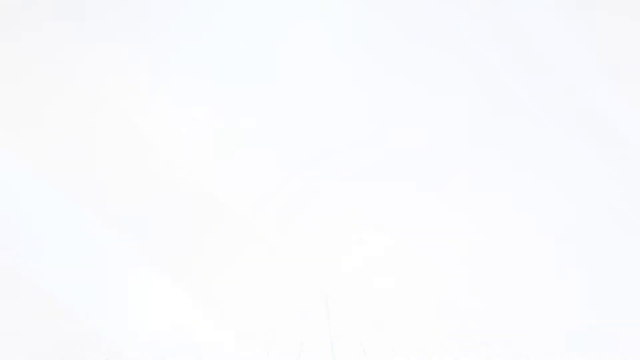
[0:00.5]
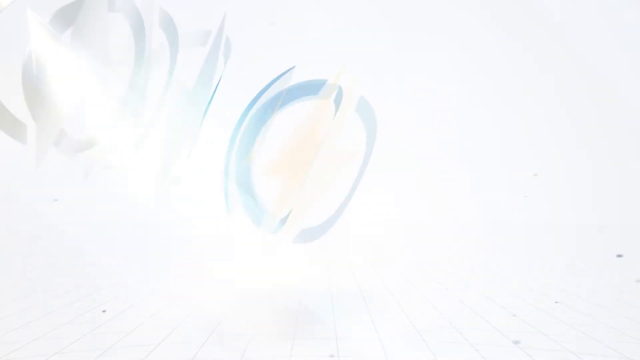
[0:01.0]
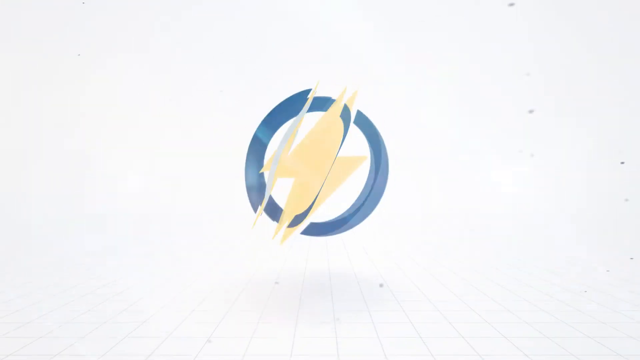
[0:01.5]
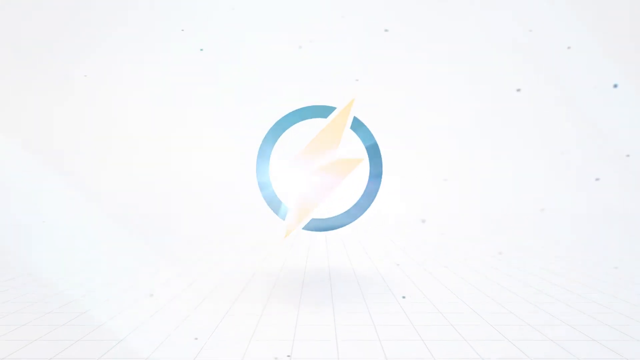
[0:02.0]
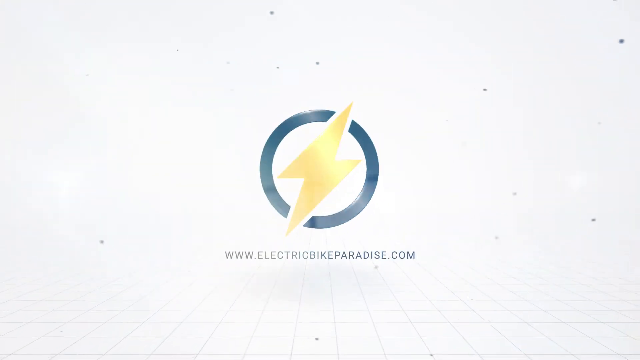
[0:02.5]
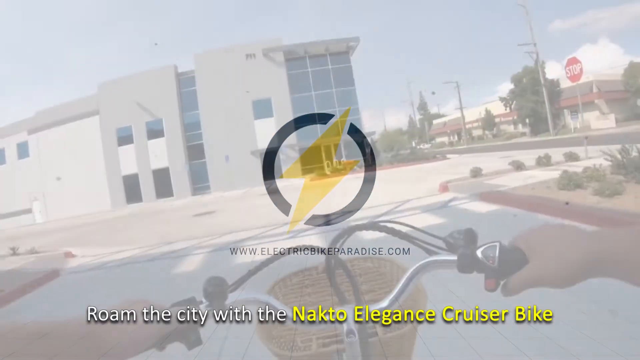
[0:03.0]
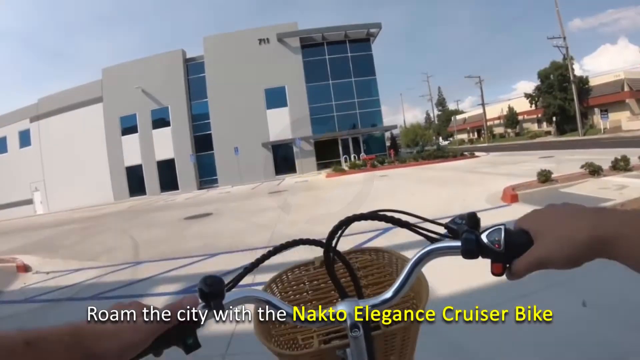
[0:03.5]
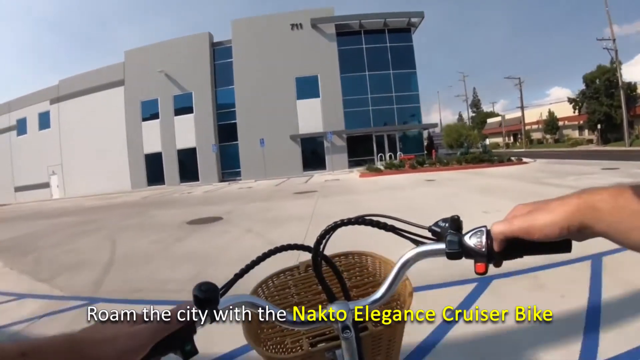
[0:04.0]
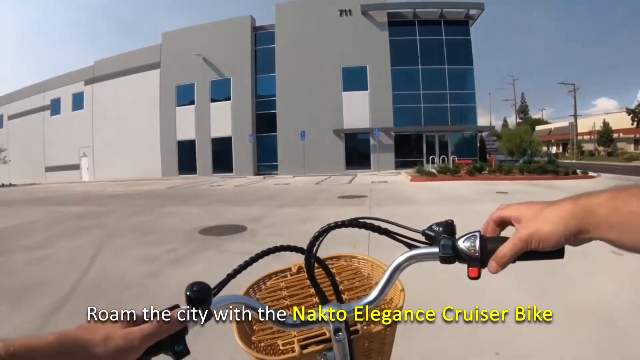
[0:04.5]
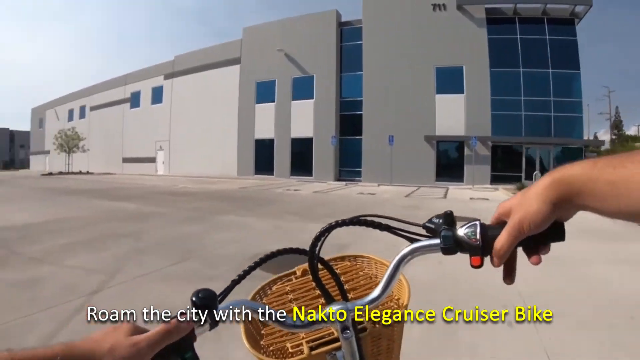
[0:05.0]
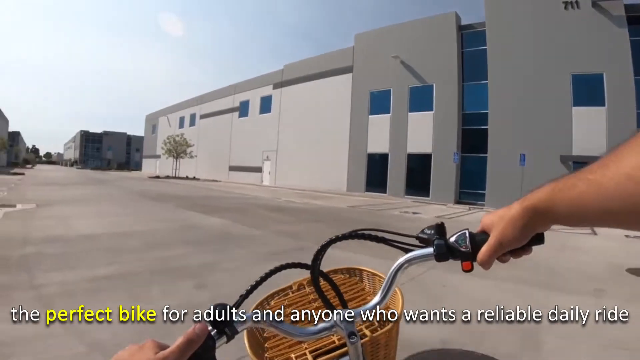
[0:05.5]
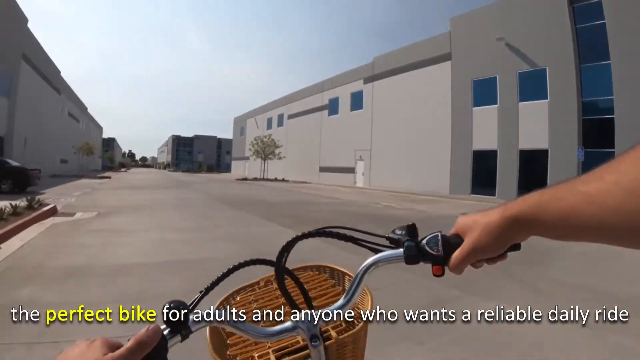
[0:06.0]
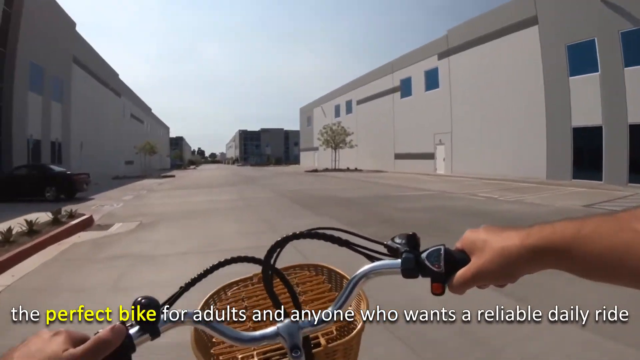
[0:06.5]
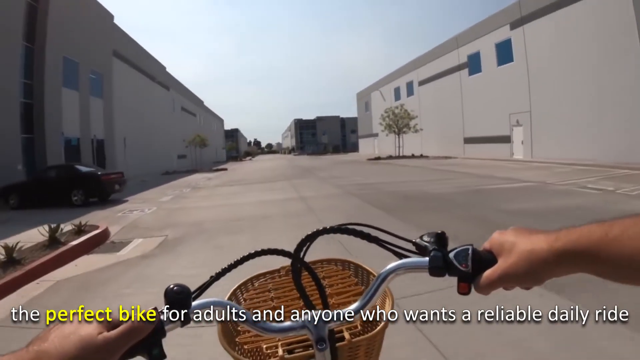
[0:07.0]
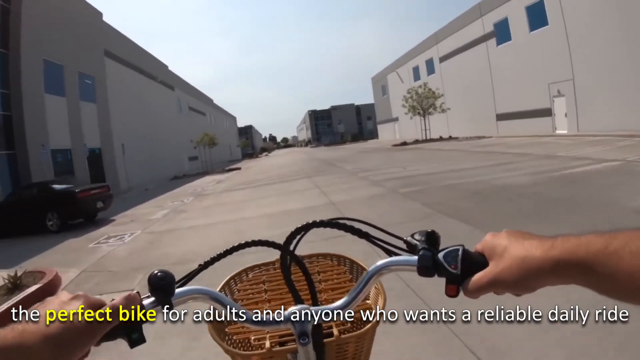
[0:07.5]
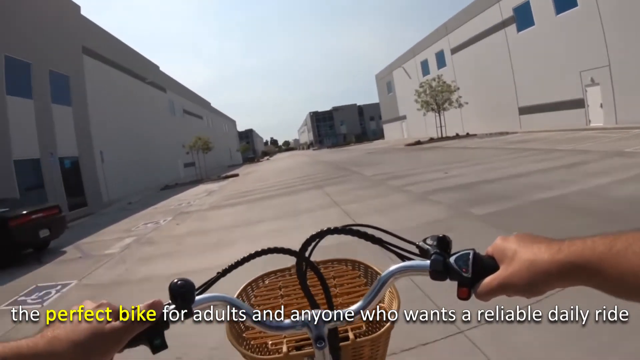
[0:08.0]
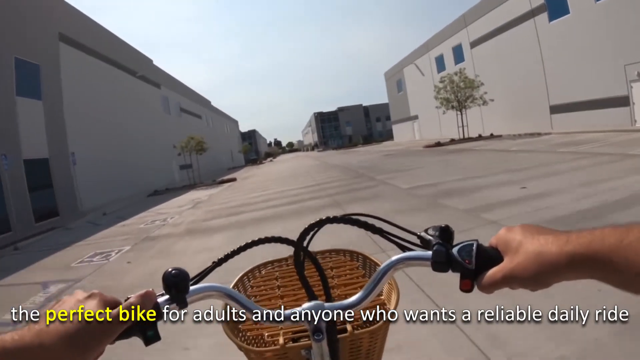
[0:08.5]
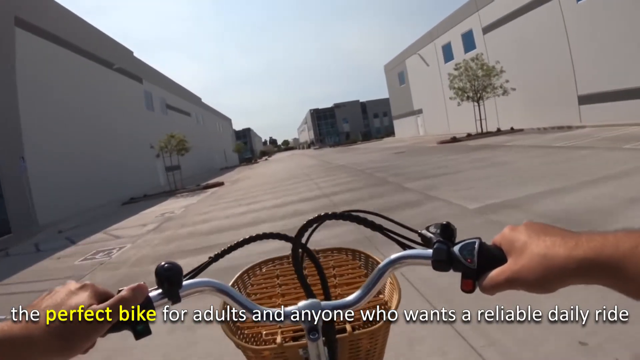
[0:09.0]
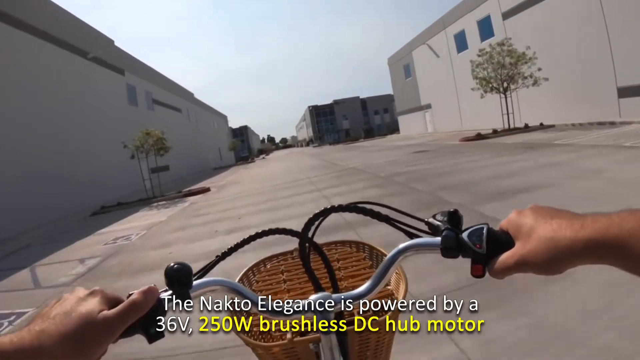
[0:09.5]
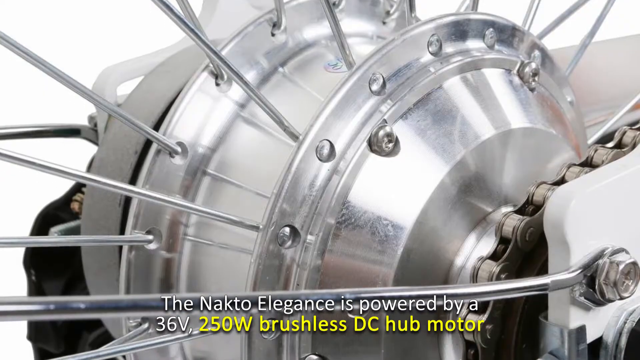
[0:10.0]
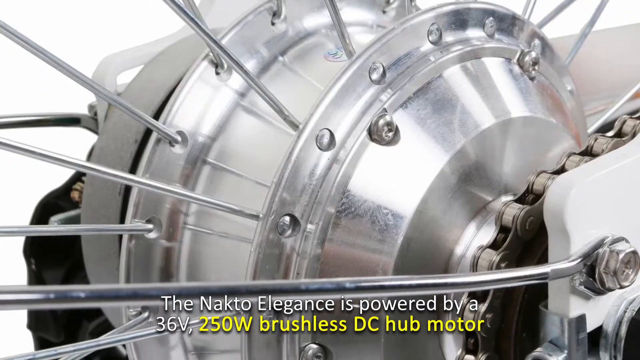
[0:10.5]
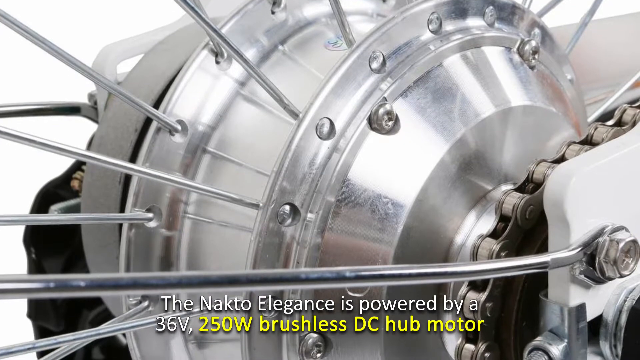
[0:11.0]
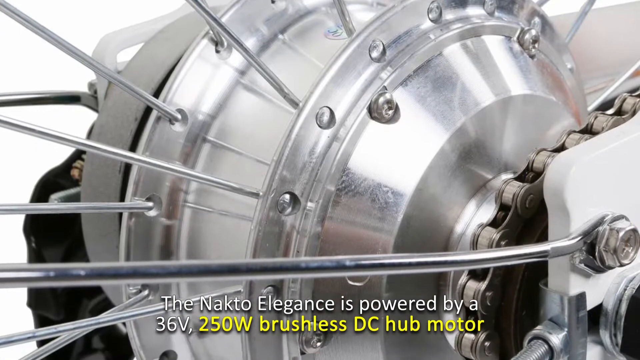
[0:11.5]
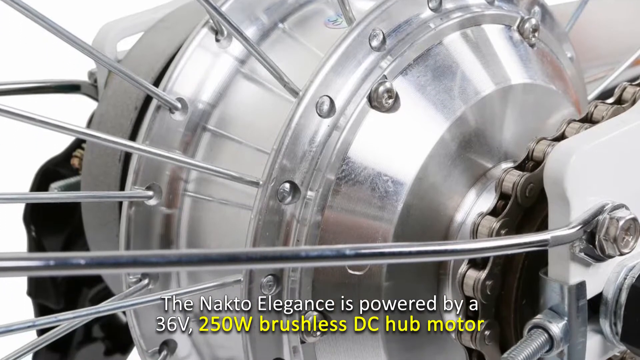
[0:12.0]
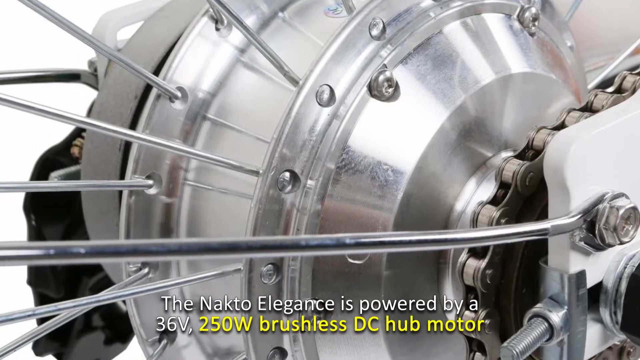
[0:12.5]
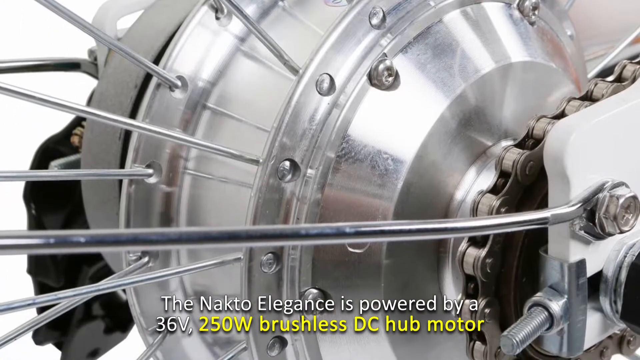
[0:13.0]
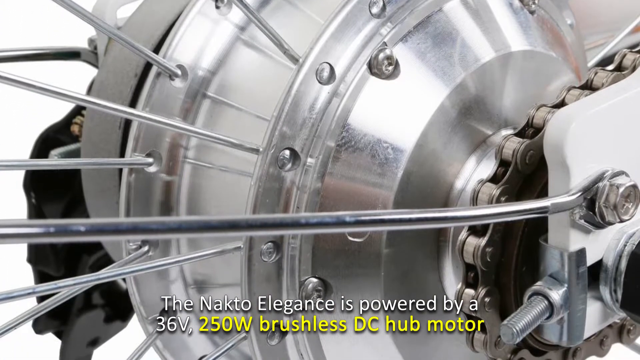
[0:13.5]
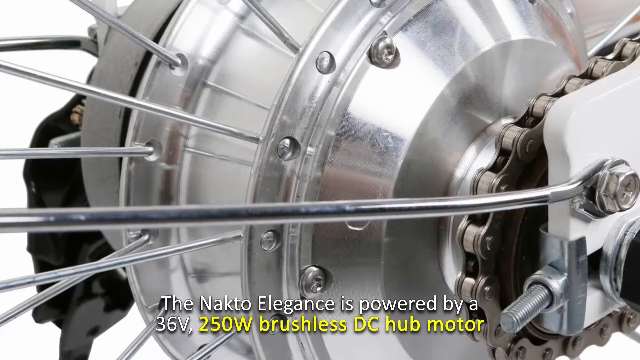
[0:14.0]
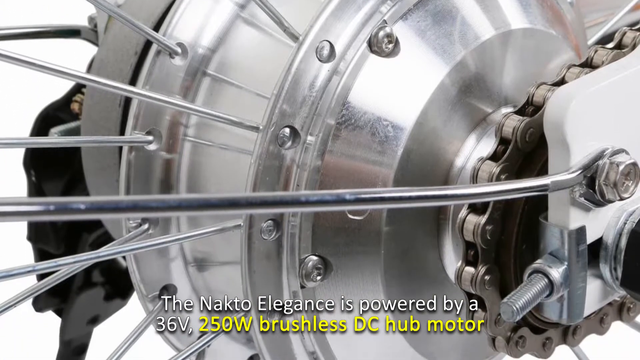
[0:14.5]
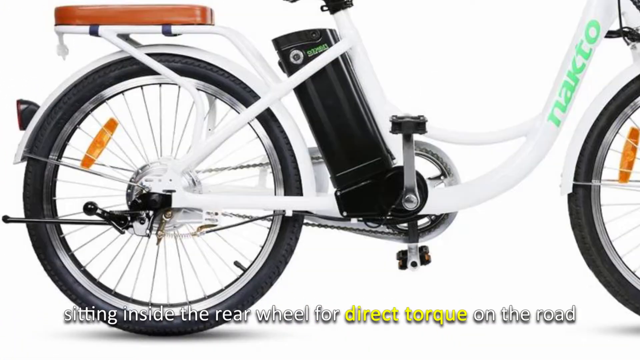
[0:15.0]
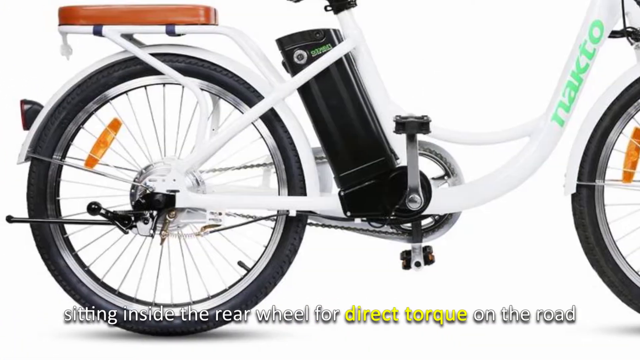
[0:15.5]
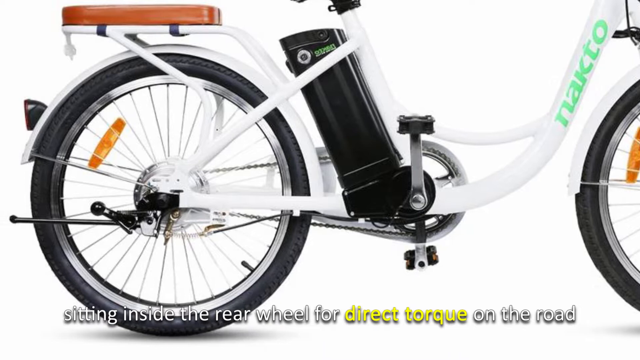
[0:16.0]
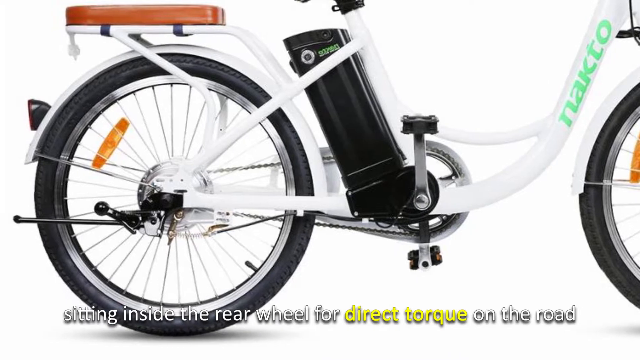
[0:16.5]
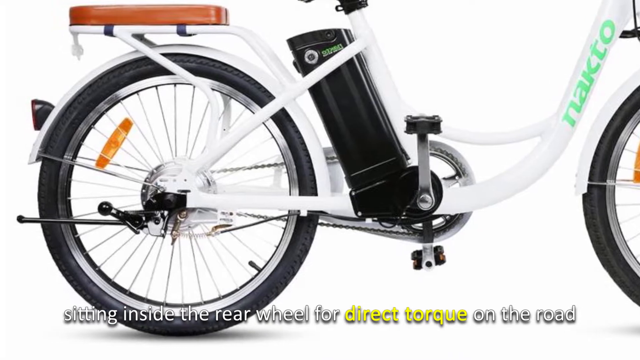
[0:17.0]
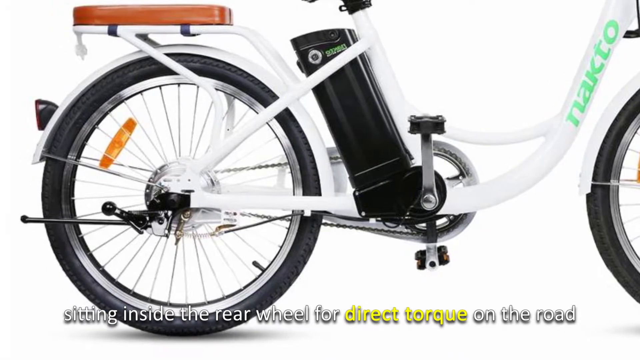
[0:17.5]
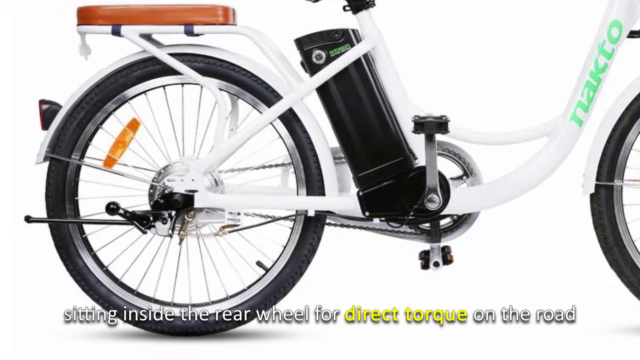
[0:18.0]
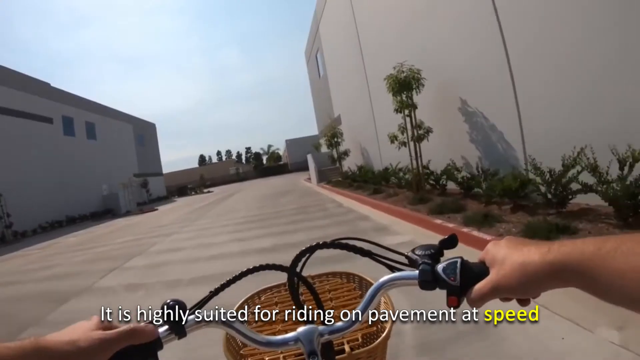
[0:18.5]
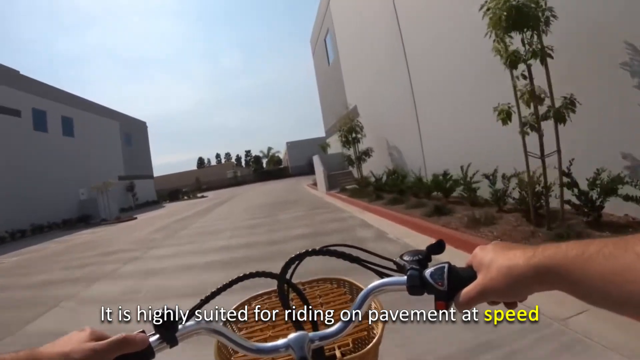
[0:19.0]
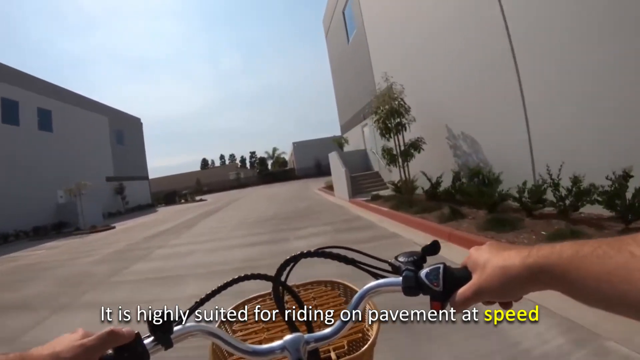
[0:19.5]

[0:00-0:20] The video opens with a circular logo that looks like a flash logo: a yellow flash or lightning icon surrounded by a blue ring. The text reads "www.electricparadise.com". Someone rides a bike with a basket in front toward a gray building with blue windows, on a street or in a parking lot. The rider turns to the left, and there is a vehicle on the left. Narrative or subtitles about the bicycle identify it as the Nakto Elegance cruiser bike, powered by a 36V 250W brushless DC motor, and state that it is suited for pavement rides.